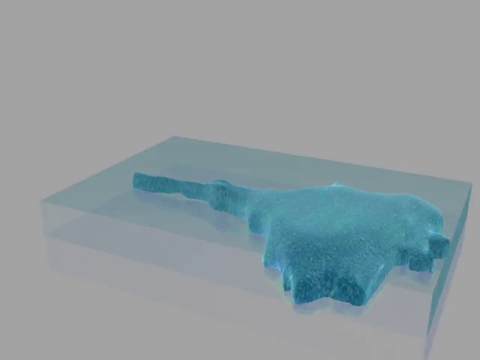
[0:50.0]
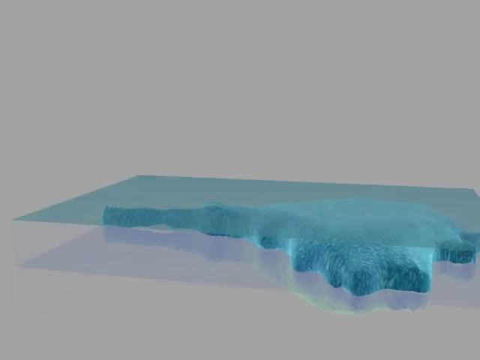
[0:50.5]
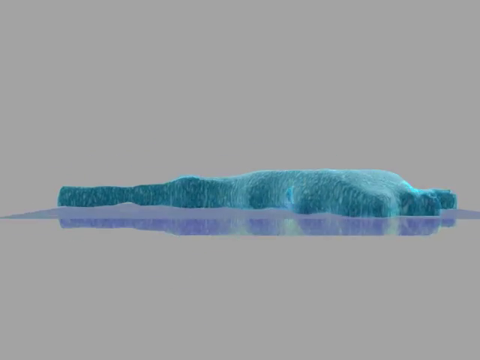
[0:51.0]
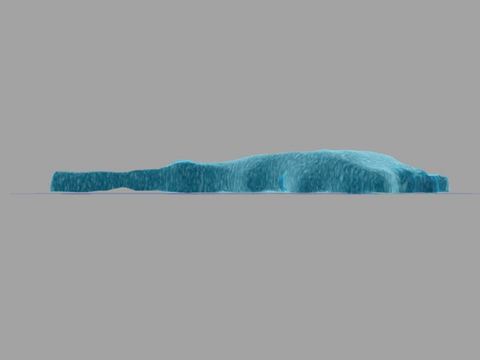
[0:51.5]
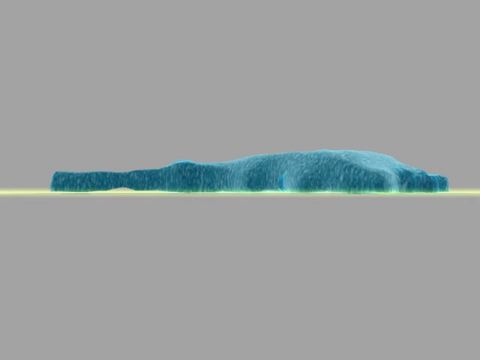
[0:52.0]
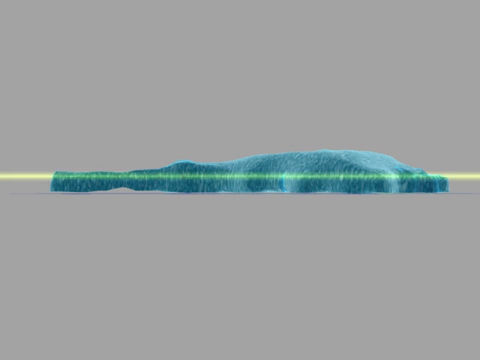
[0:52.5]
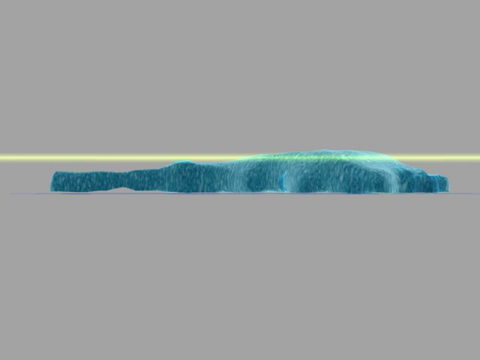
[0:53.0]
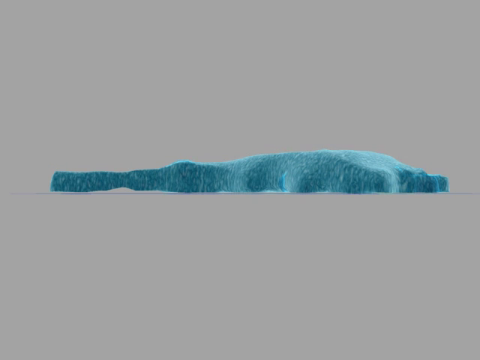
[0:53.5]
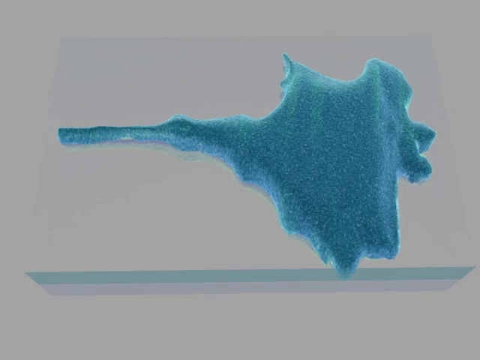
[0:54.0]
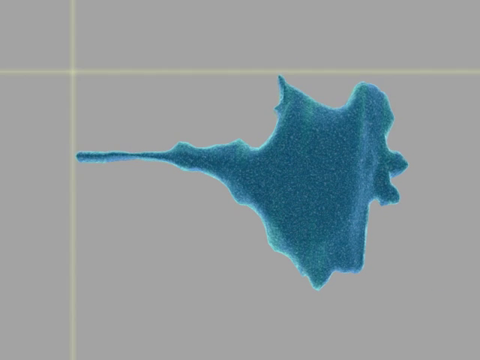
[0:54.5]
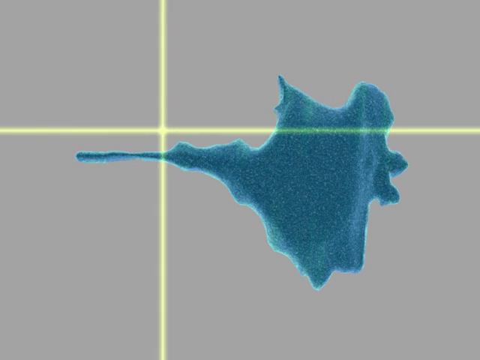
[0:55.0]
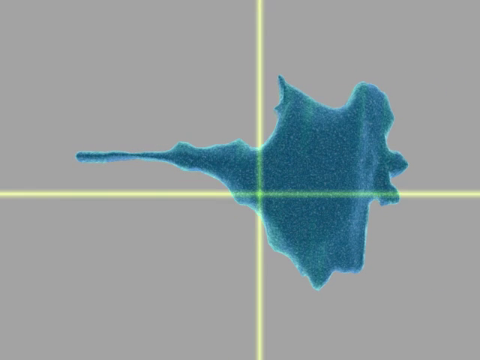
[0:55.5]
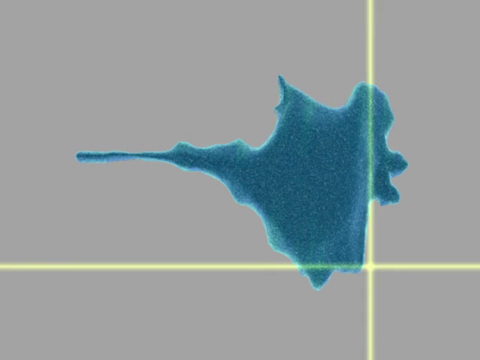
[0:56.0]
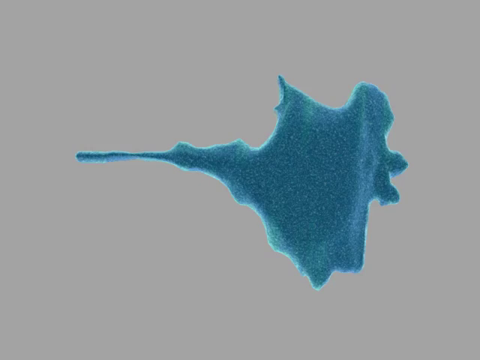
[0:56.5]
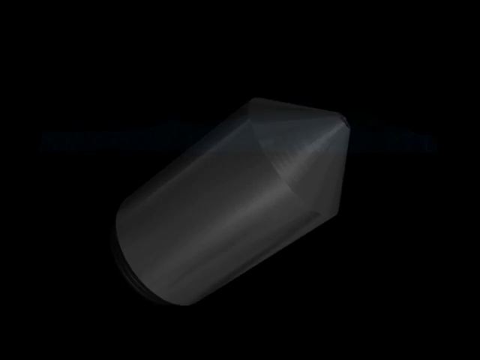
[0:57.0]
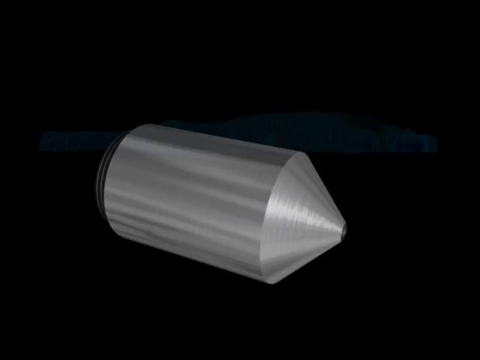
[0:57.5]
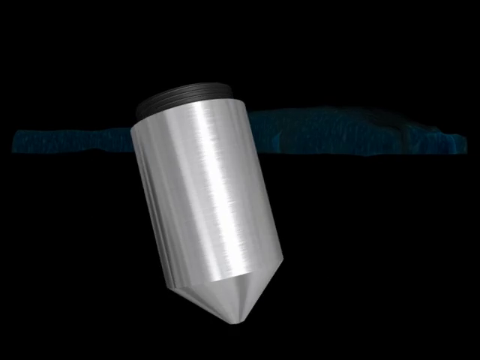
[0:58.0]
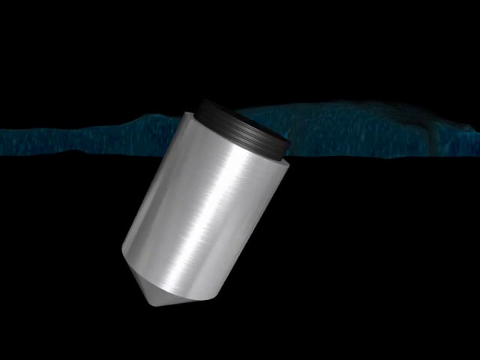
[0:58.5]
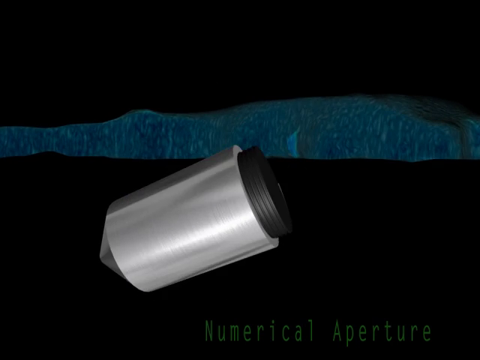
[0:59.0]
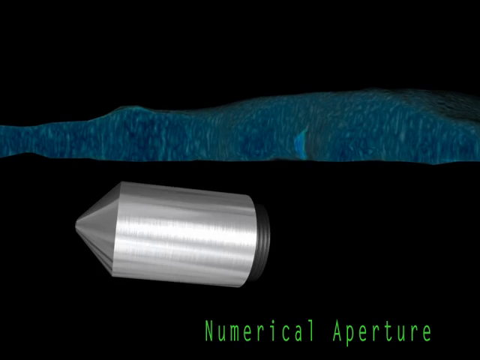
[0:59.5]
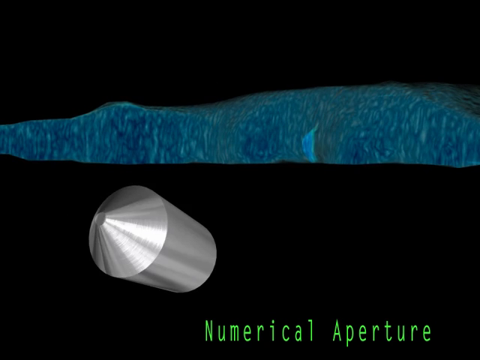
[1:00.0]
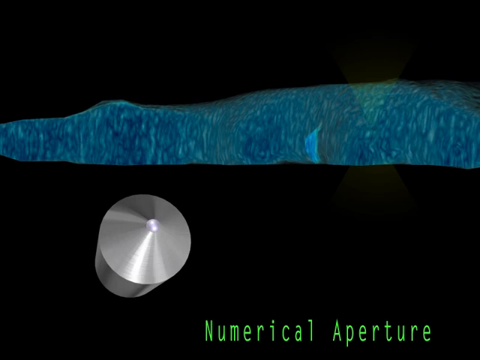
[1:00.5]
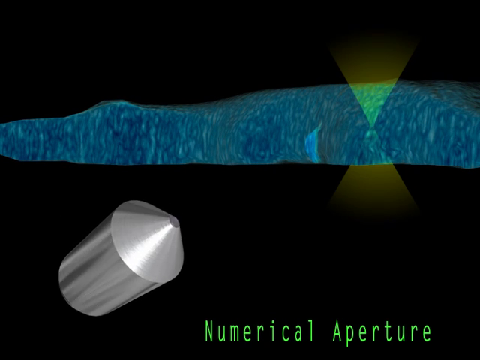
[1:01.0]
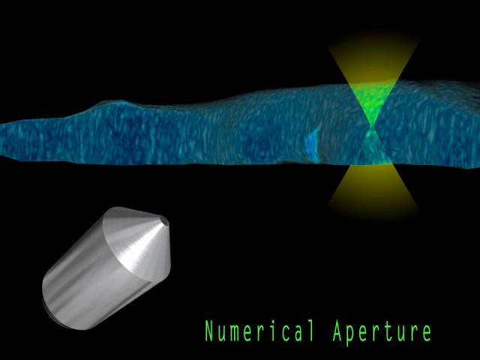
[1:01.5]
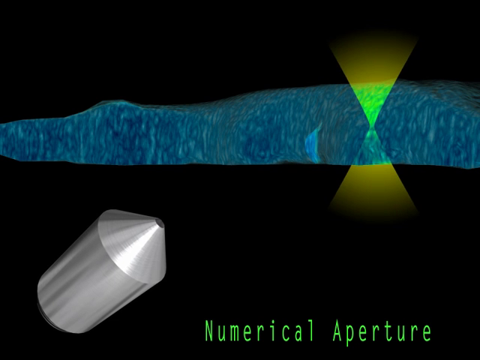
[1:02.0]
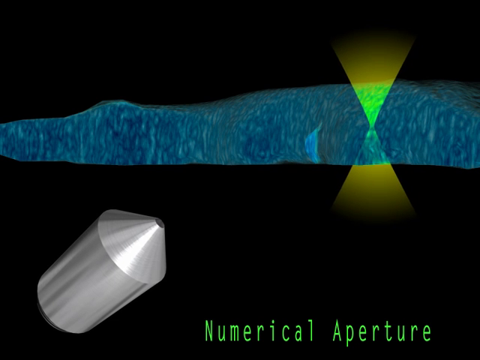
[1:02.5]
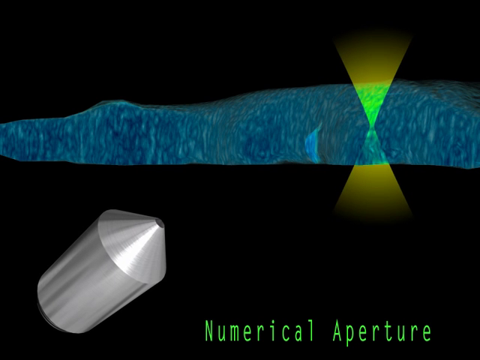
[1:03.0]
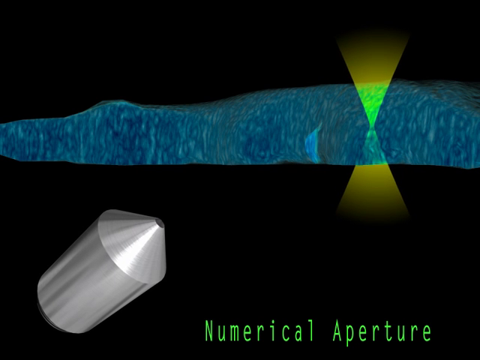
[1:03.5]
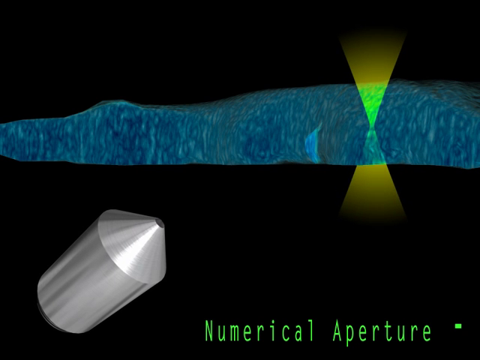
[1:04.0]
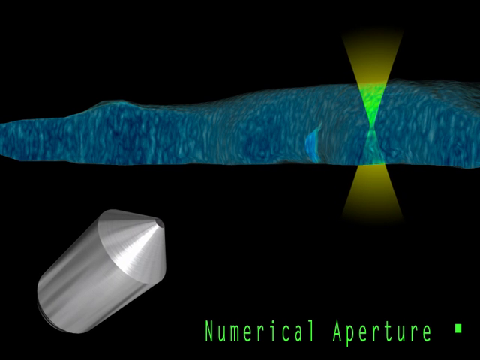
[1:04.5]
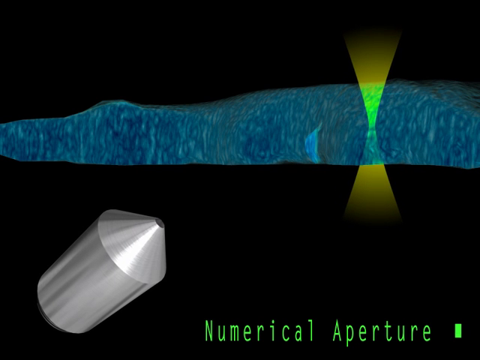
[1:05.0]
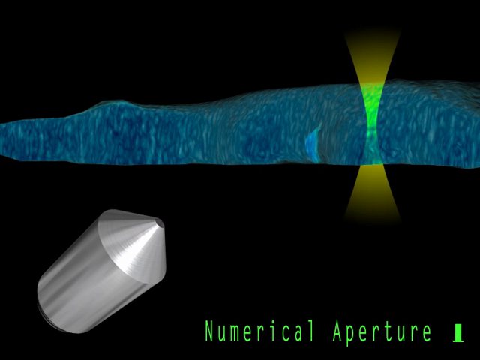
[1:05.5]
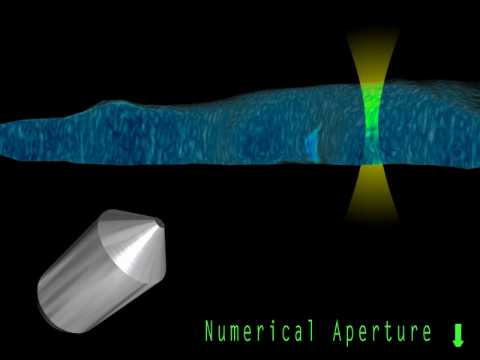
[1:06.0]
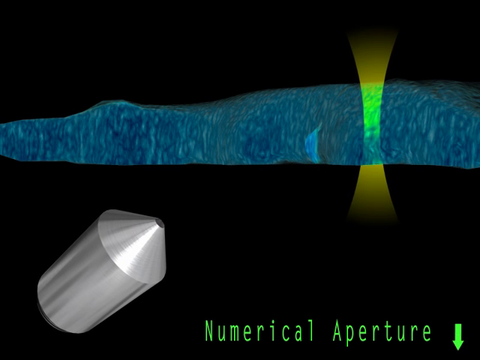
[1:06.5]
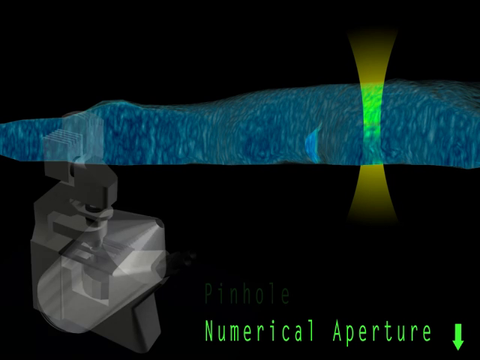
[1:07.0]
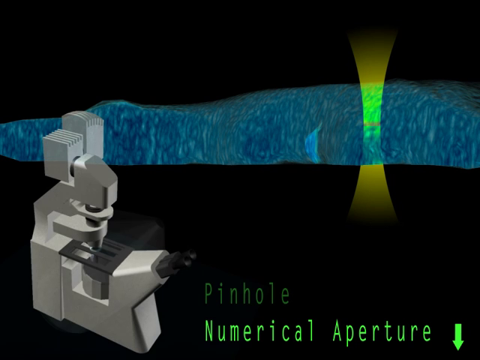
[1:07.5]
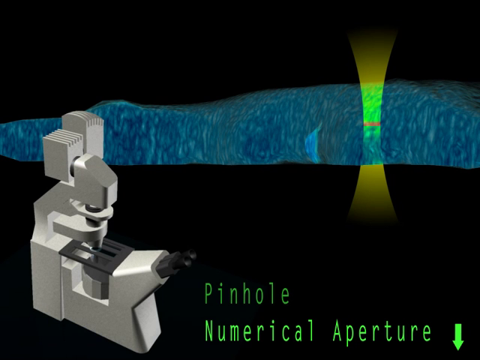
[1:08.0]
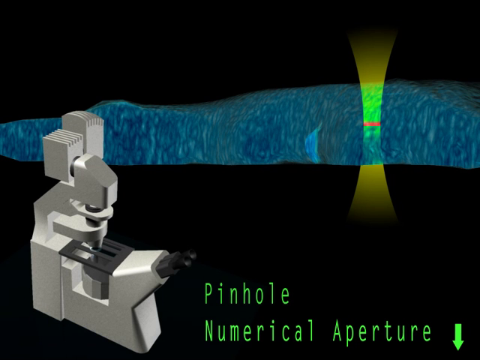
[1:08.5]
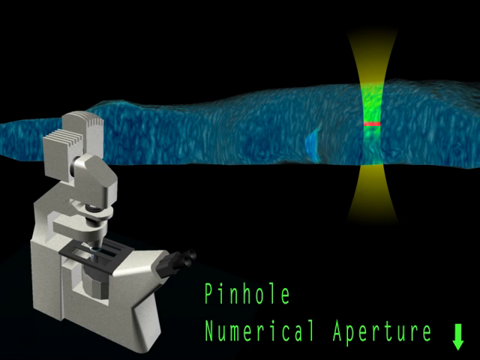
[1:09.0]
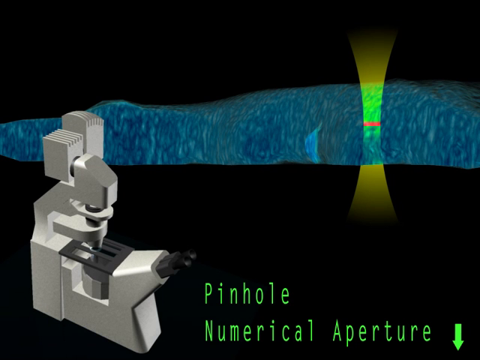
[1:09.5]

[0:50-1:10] The video goes more in depth, scanning a fragment of the section. Something like a microscope is shown. The text "numerical aperture" is listed on screen, and the pinhole numerical aperture on the microscope is shown. Toward the end, a fraction of the pieces seen earlier is shown.